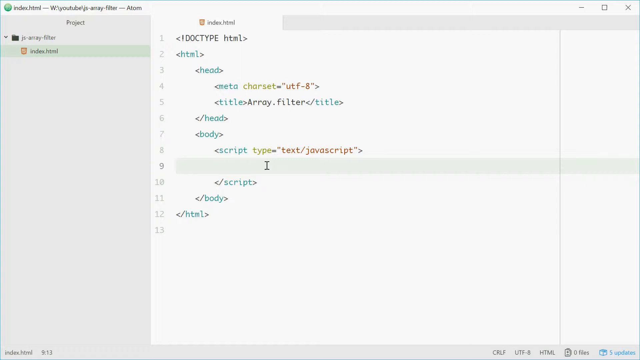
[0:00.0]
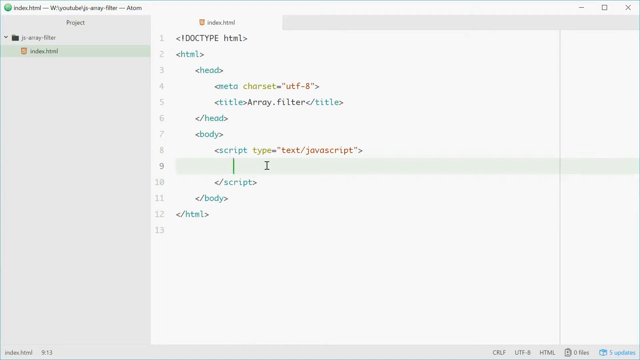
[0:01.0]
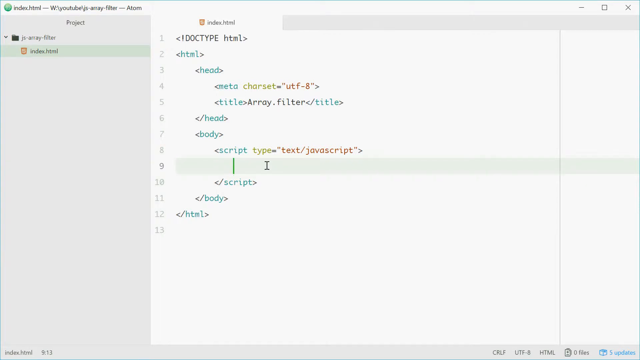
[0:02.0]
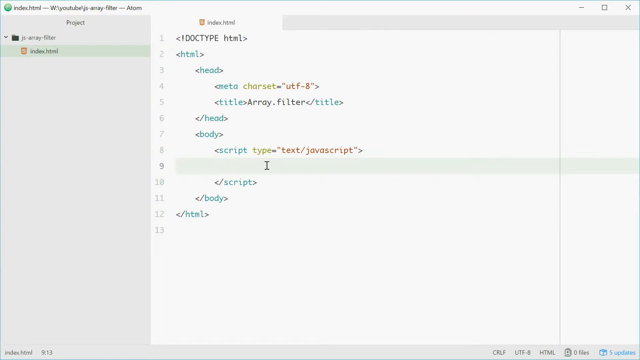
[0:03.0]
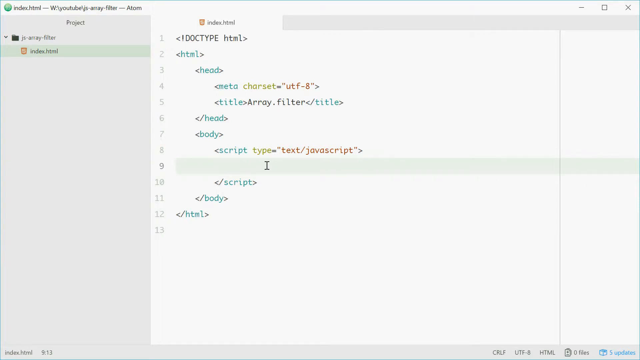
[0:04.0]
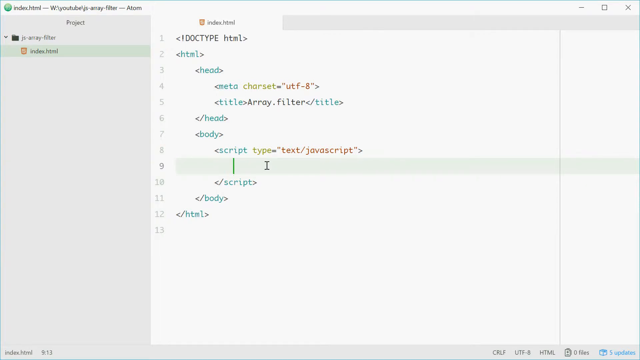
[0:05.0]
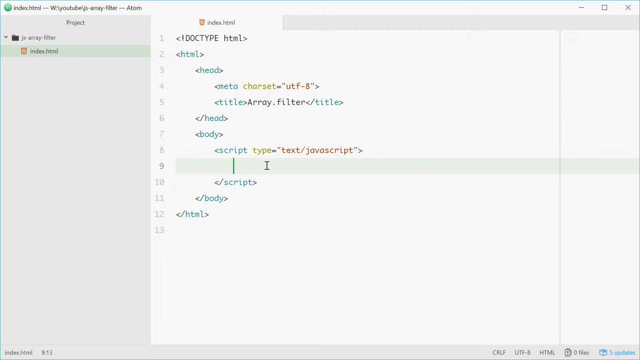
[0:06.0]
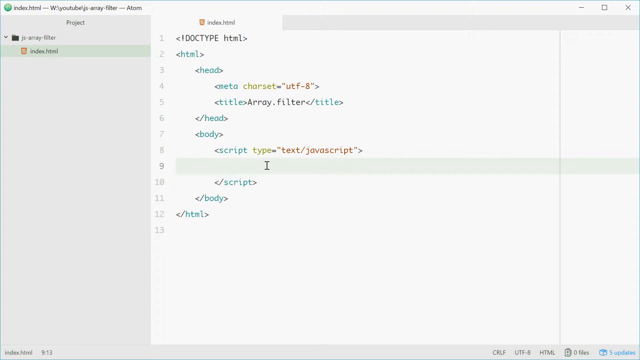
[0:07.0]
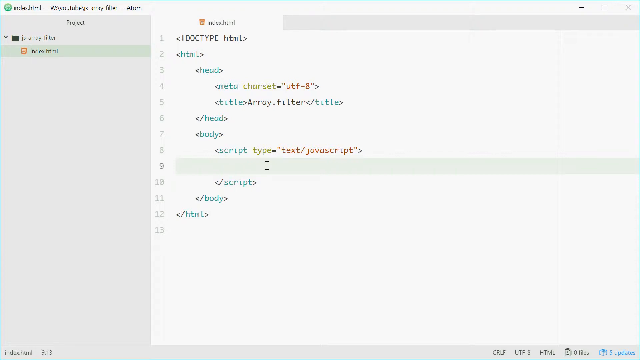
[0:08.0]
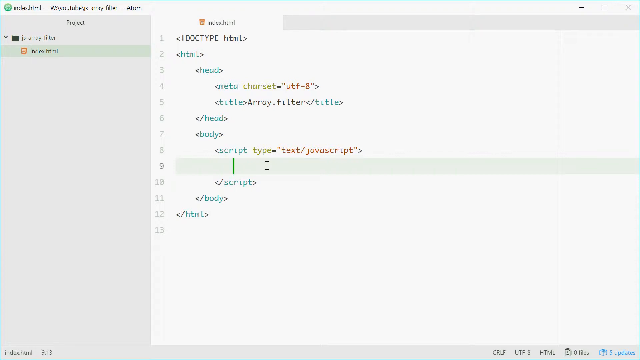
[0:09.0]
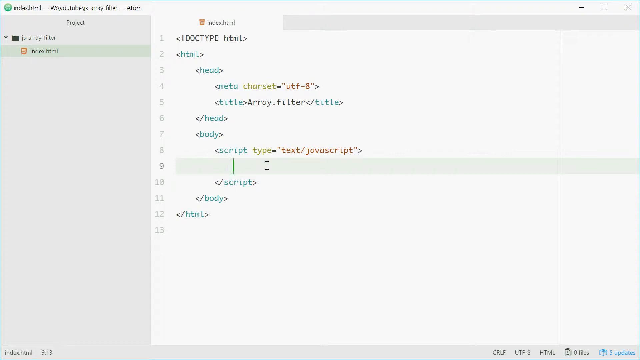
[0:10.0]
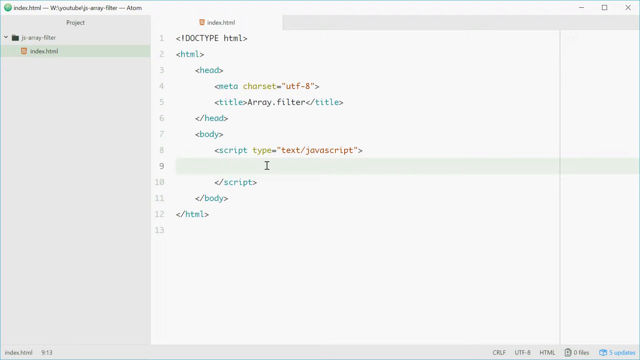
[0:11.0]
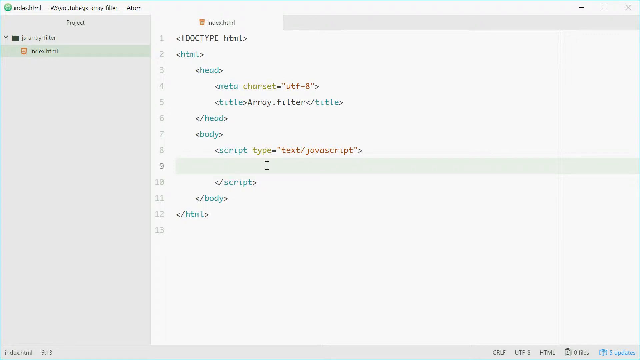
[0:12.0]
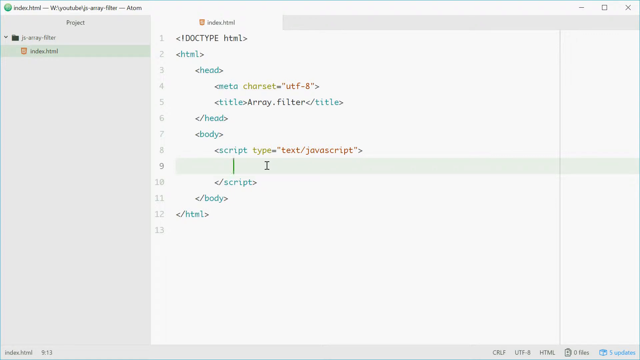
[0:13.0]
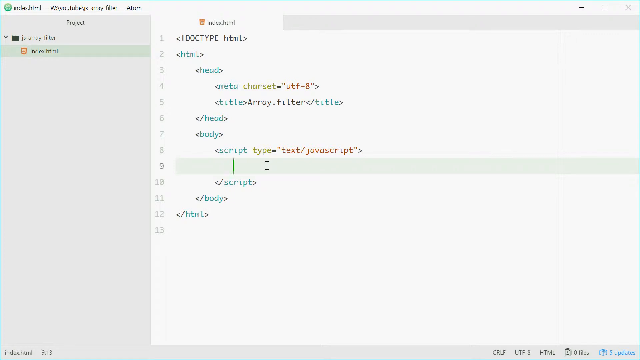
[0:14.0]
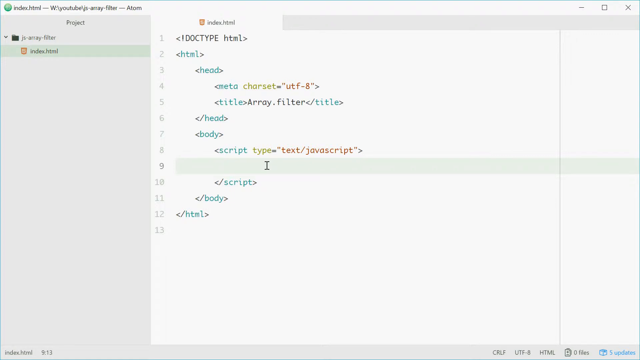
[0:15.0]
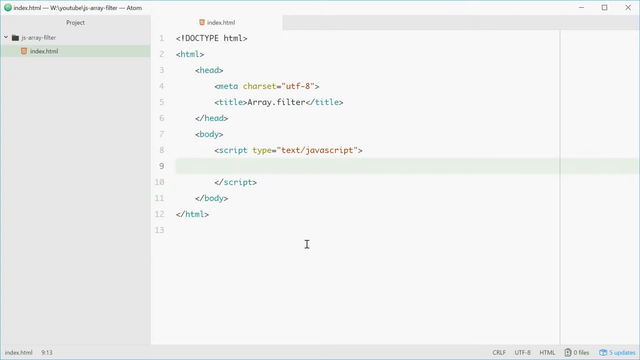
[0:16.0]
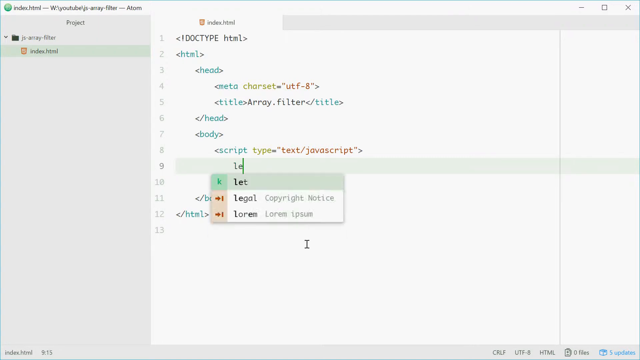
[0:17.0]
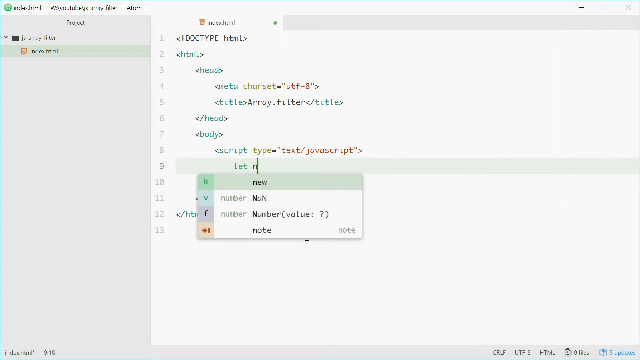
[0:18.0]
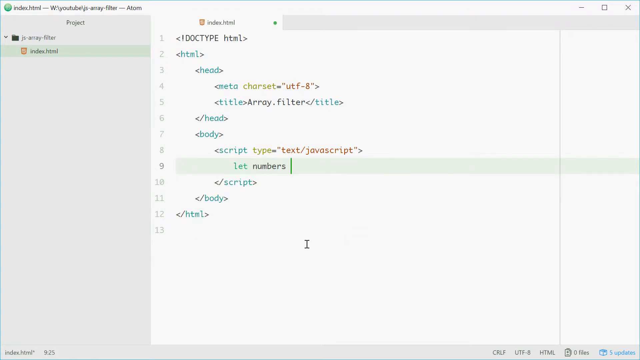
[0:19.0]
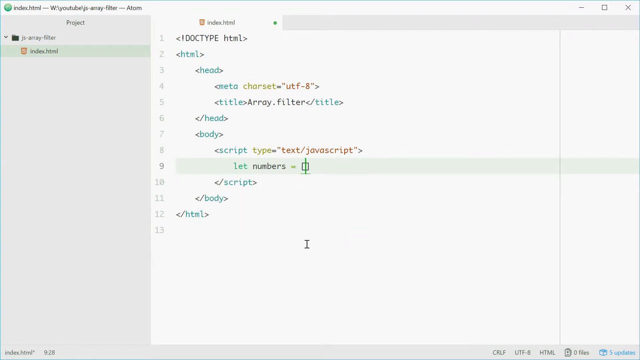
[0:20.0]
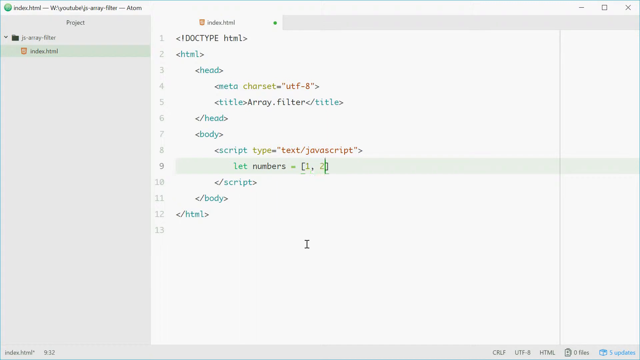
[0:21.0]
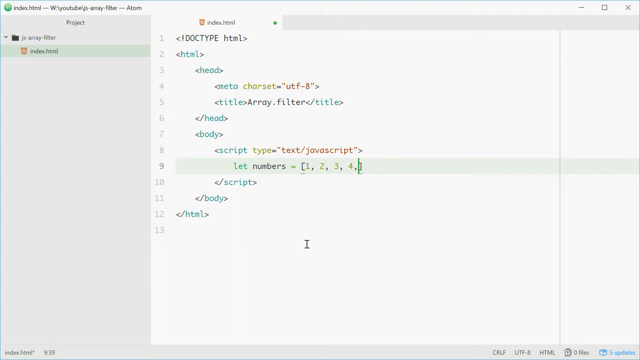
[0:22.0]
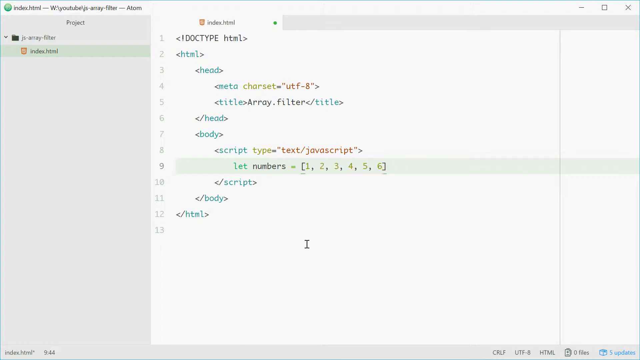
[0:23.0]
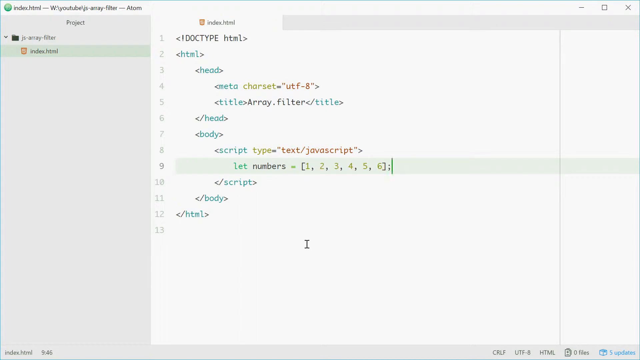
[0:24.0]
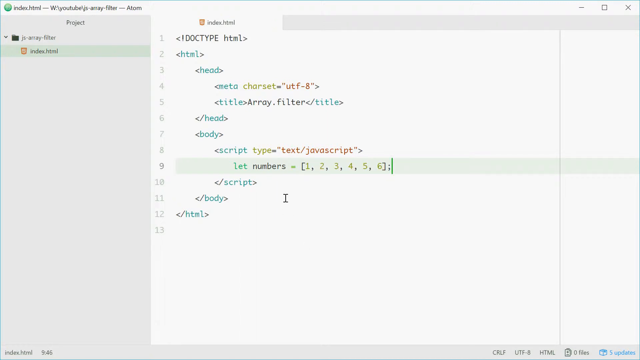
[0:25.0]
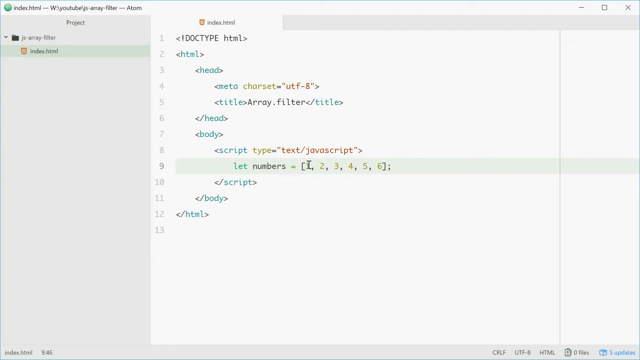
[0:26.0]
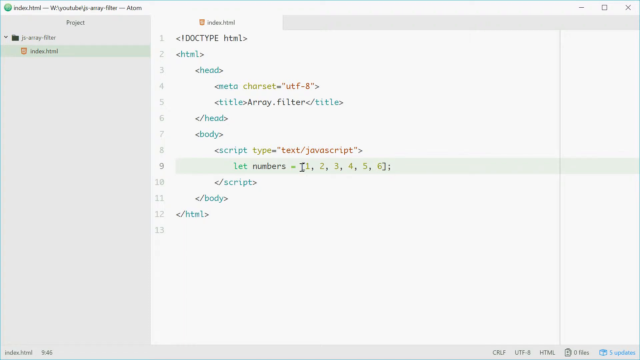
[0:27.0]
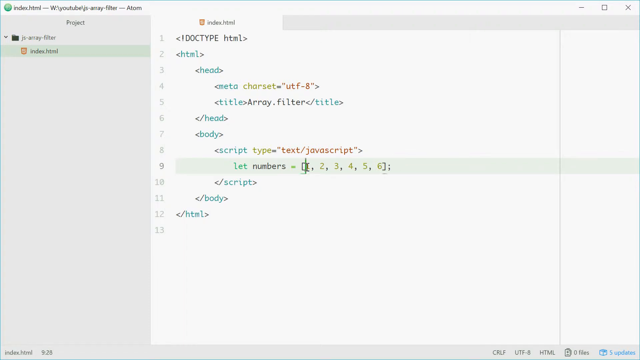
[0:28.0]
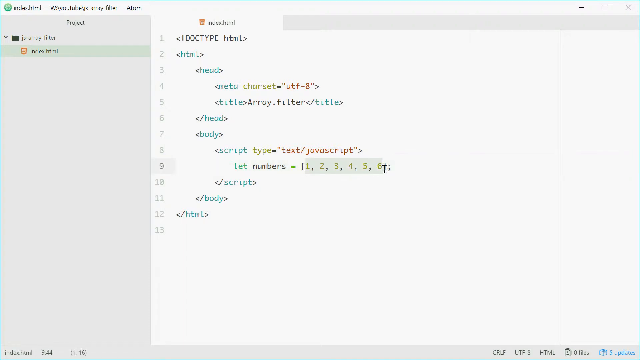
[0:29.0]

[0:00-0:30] A screen recording of someone's computer shows code being typed in some sort of software, with a coding script page loaded up. At the top left the text reads "index.html, YouTube, ArrayFilter, Atom". The interface has a very clean white background, with different-colored text for different coding words. The mouse hovers over line 9, and the person types "let numbers = [1, 2, 3, 4, 5, 6];". Line 9 is kind of highlighted in green. Other lines of text are visible: line 1 reads "!doctype html", line 2 "html", line 3 "head", and line 4 "meta charset=utf-8".